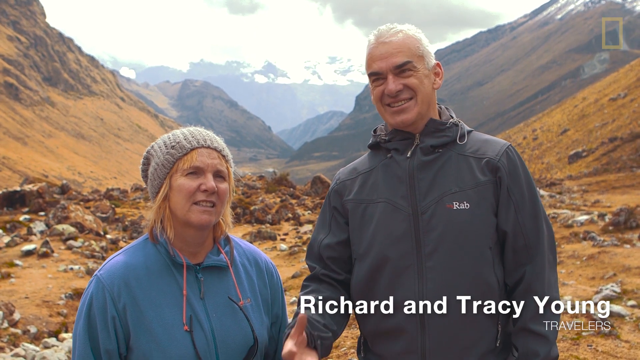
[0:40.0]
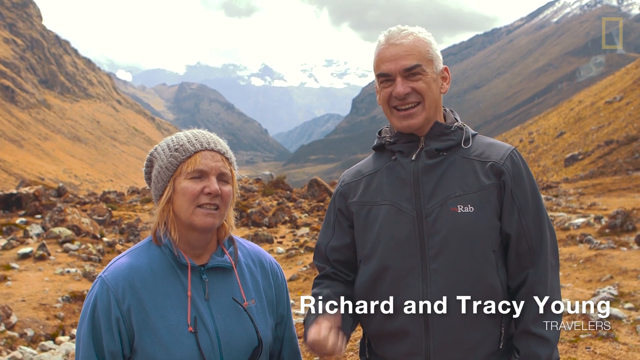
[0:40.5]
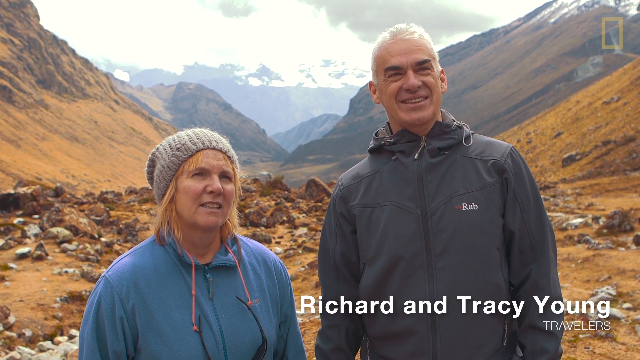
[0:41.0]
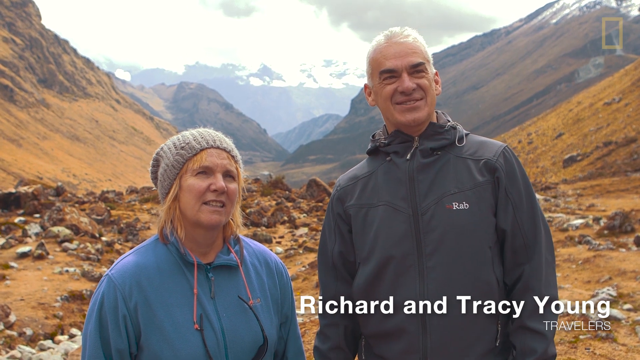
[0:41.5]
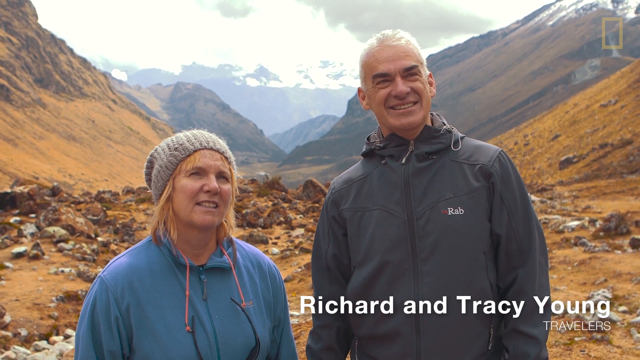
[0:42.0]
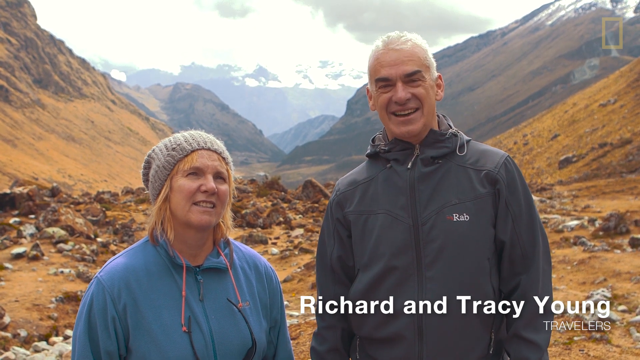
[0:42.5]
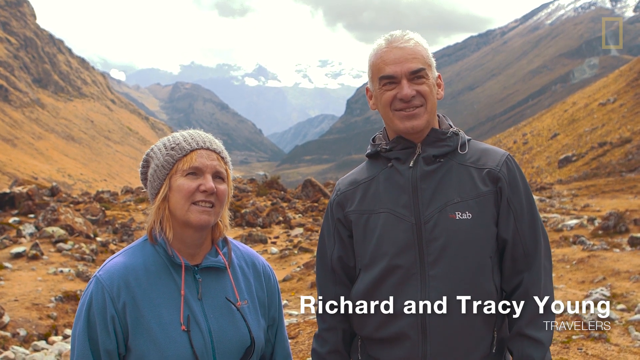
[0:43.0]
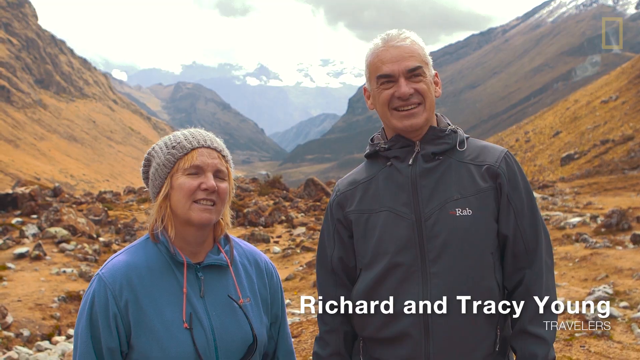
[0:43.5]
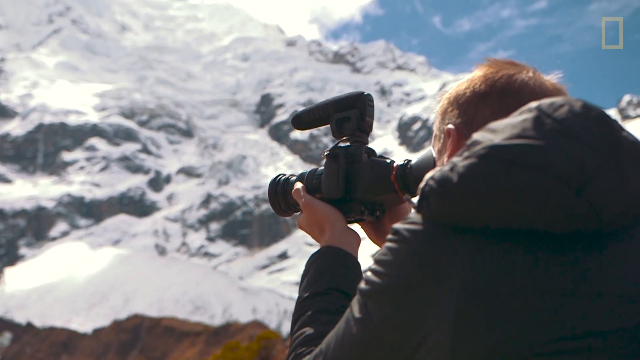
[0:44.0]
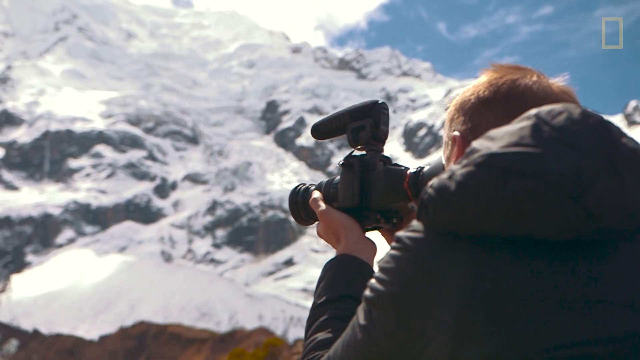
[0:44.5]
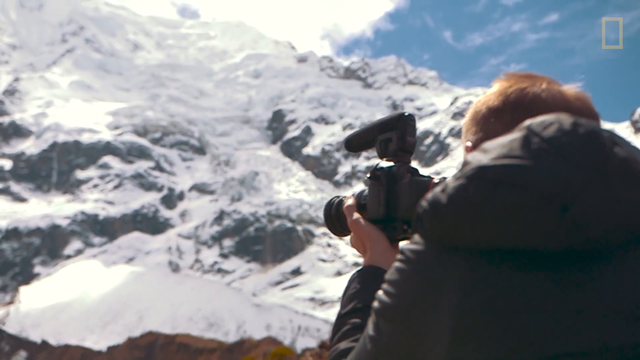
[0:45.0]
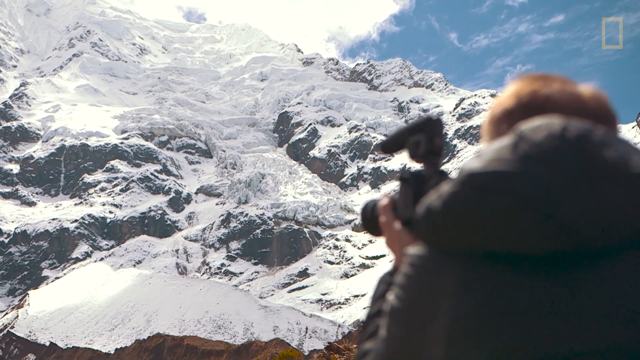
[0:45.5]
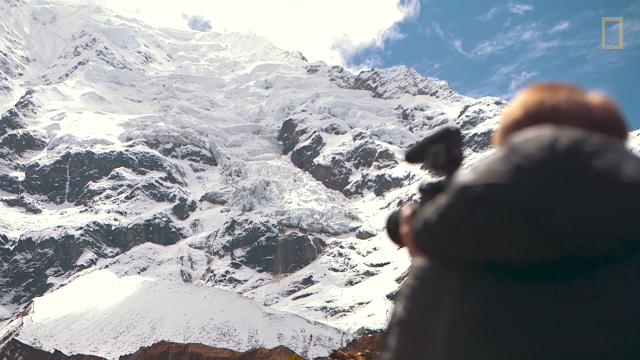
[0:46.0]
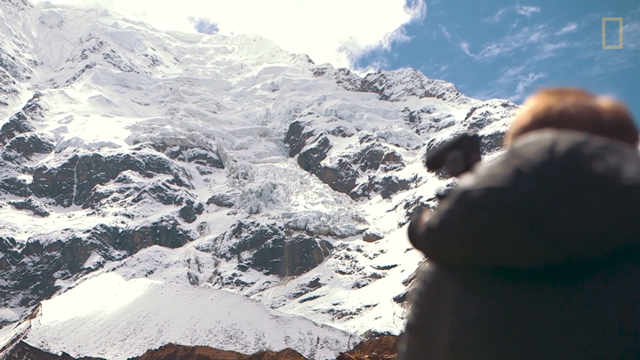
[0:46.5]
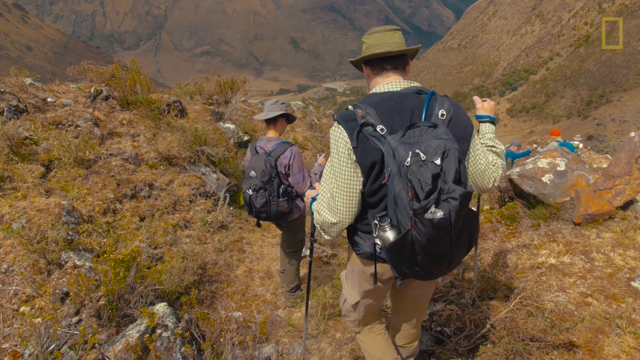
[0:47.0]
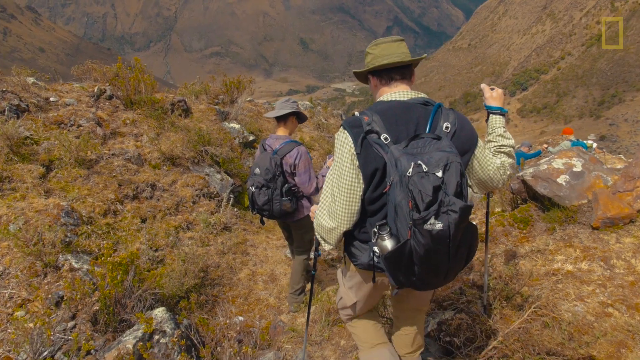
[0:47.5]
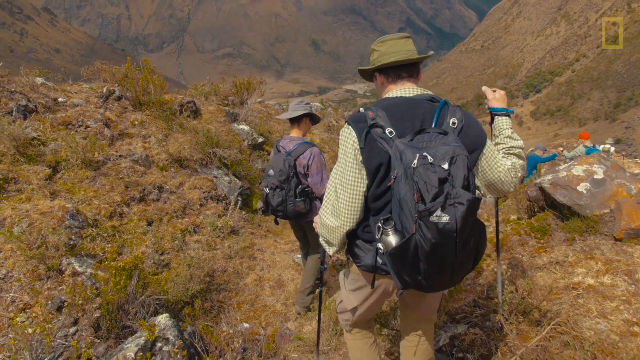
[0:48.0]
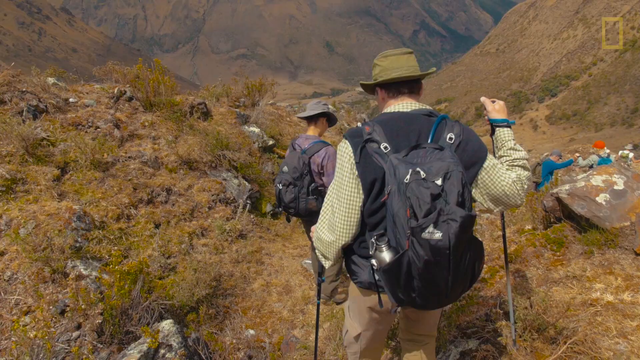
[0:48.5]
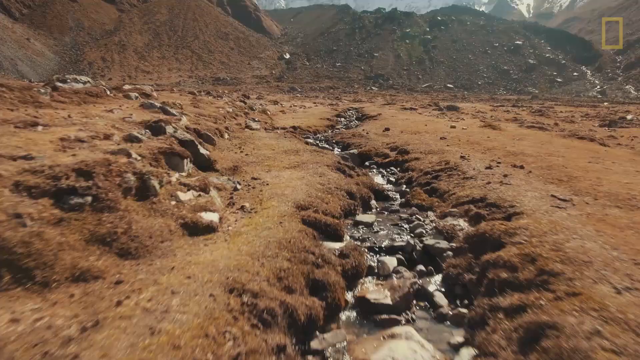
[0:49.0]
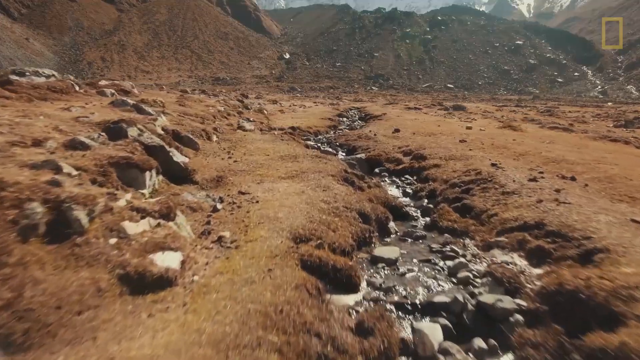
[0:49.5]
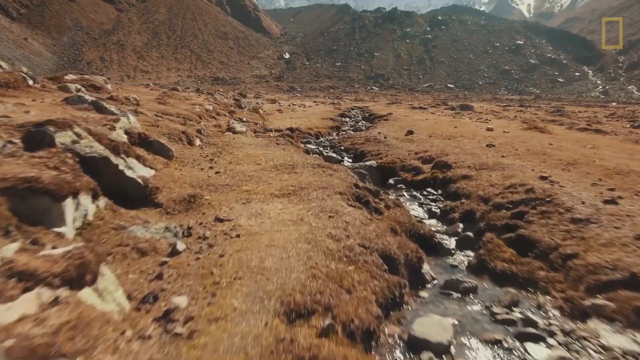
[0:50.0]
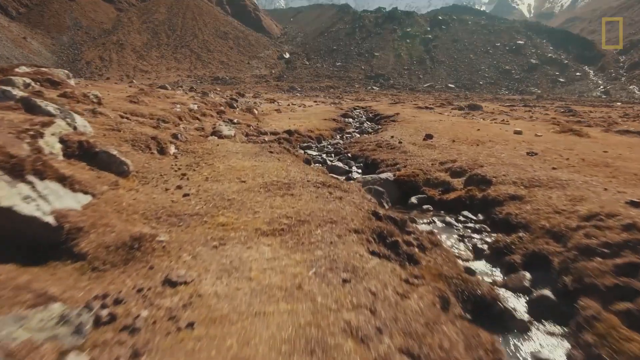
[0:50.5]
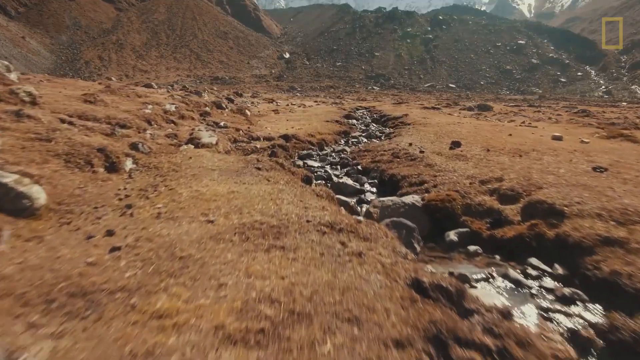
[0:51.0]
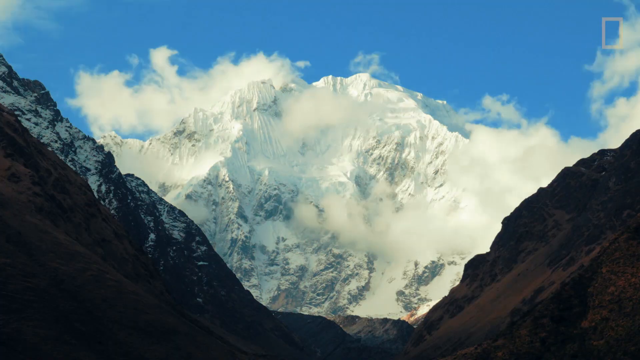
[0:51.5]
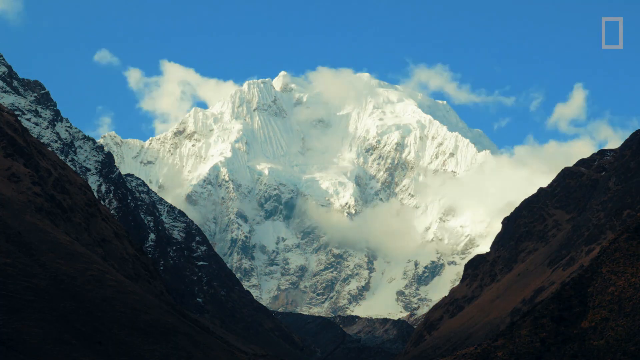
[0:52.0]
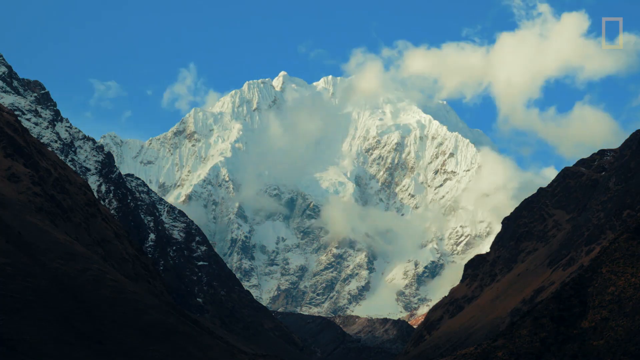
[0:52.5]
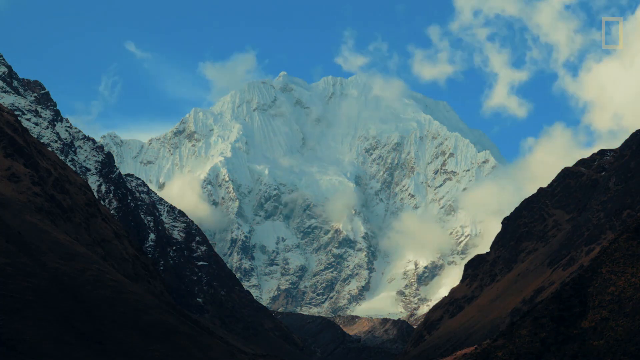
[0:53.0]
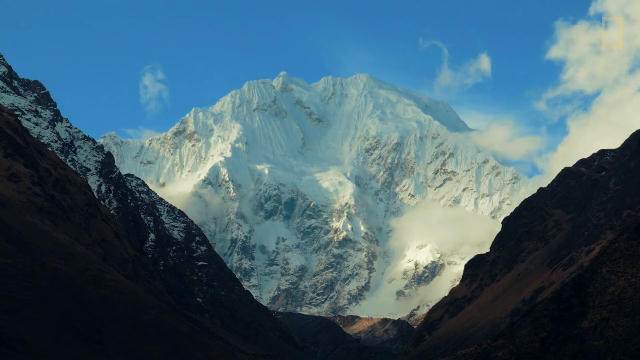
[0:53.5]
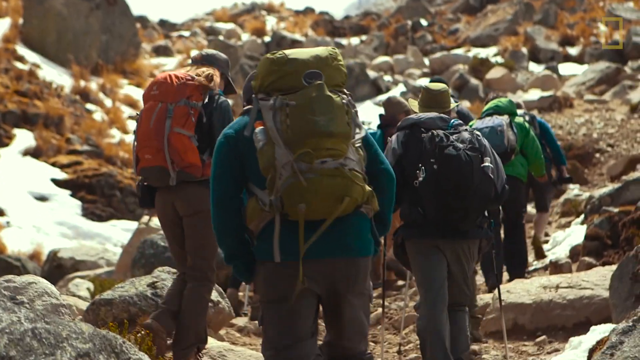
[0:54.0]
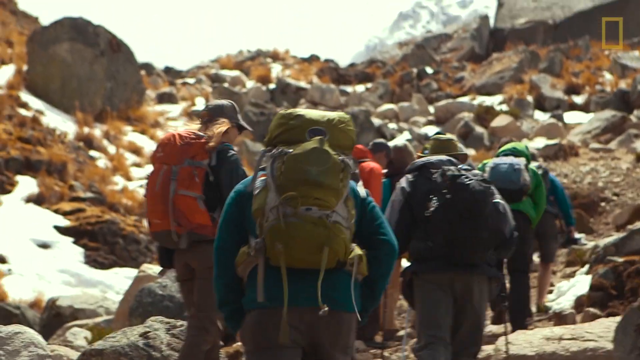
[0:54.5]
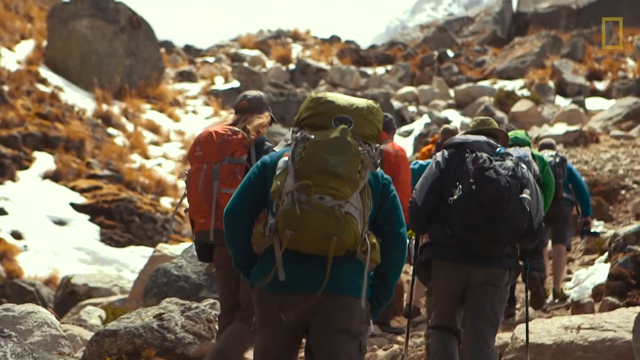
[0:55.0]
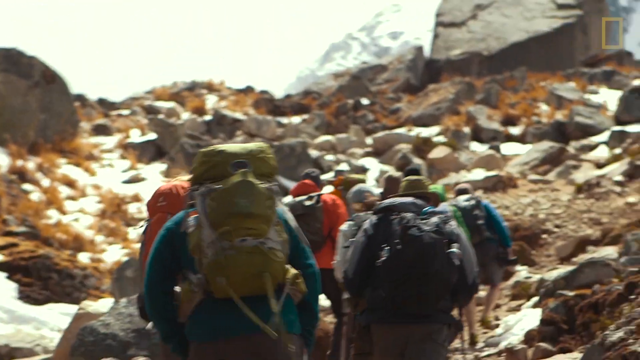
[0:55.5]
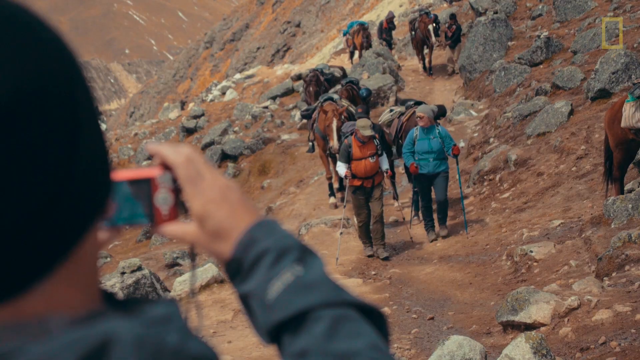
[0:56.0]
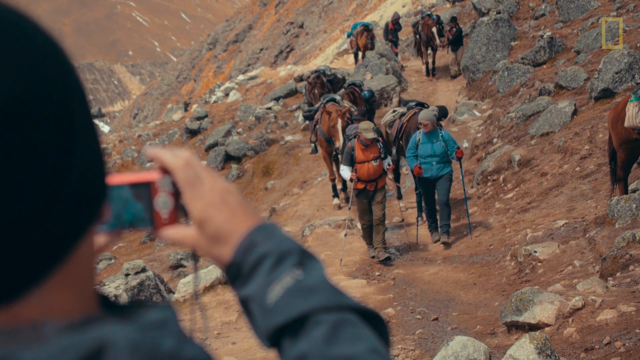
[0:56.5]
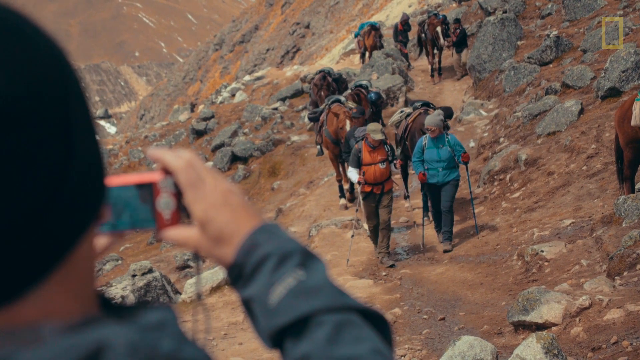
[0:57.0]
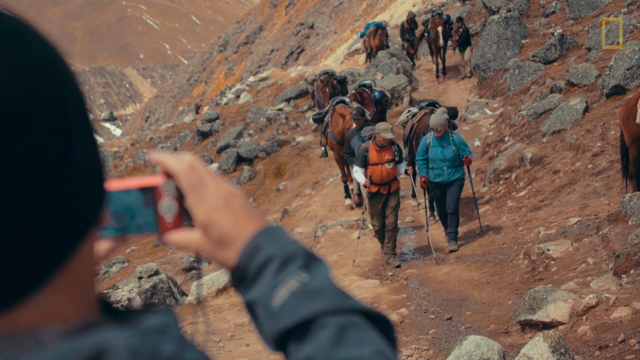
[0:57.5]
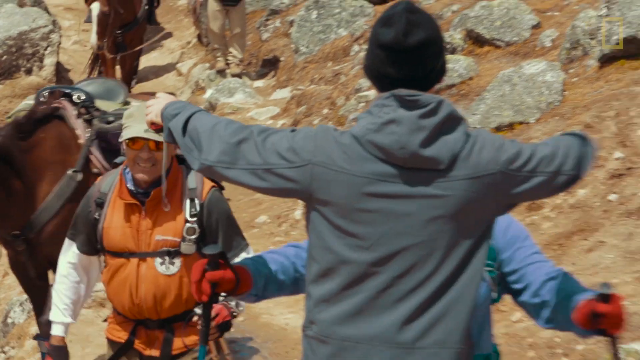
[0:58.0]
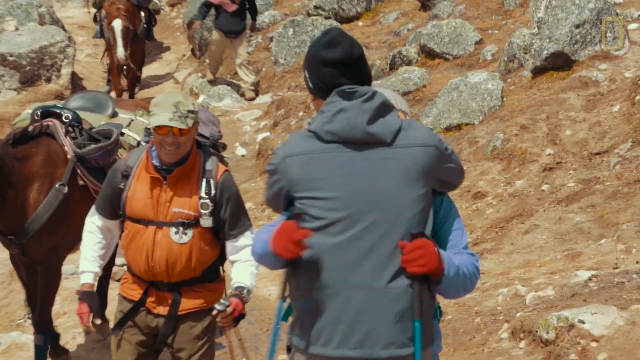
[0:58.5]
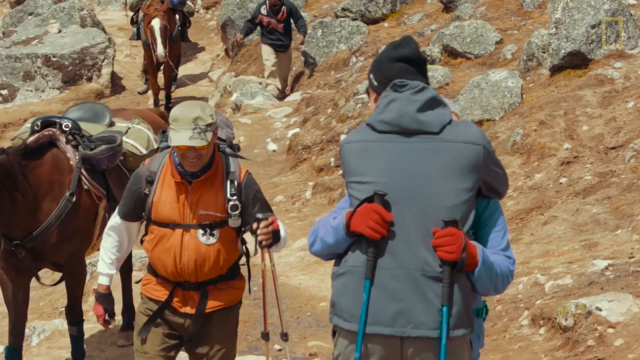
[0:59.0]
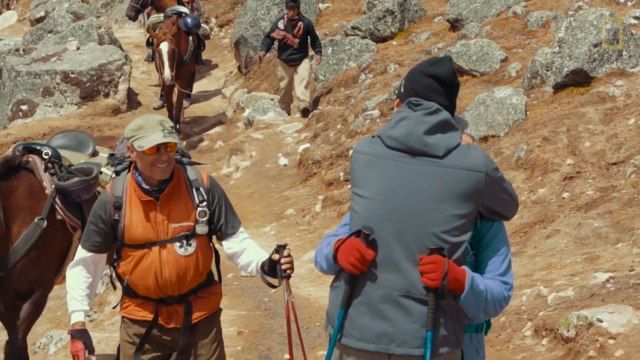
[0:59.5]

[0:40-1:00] The travelers Richard and Stacey Young are shown smiling. The trail people came up is well defined but rough, with a lot of rocks and boulders, and water has cut through the trail in places. The camera is then behind other hikers going down, taking good-sized steps with poles to keep steady. Most wear heavy backpacks. There are views of big snow fields, glaciers, greens and golds, and snow lying there. Hikers walk up through a lot of rocks, and water bubbles along. The trail is fairly well traveled, with quite a few people moving around. Some people have horses, which they are walking and leading rather than riding; the horses mostly seem to have Australian-style saddles without horns, along with saddlebags.